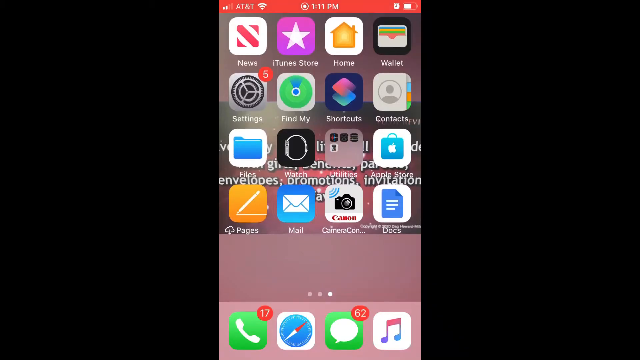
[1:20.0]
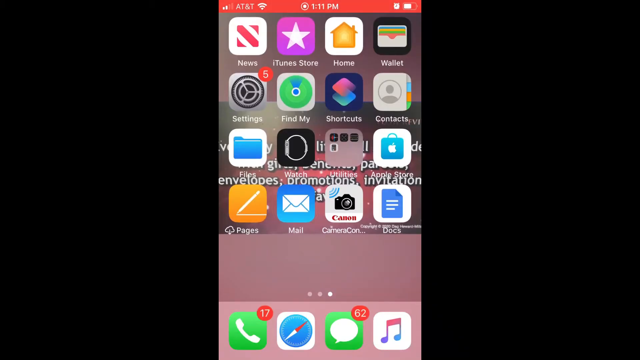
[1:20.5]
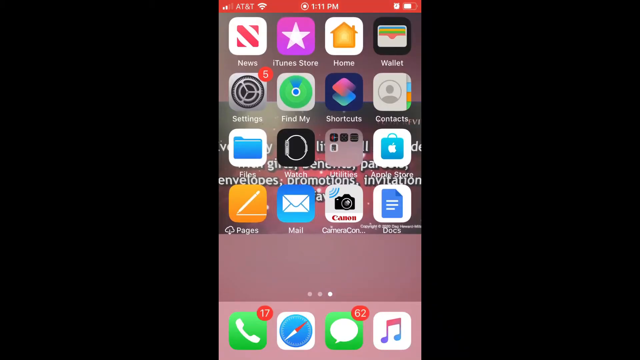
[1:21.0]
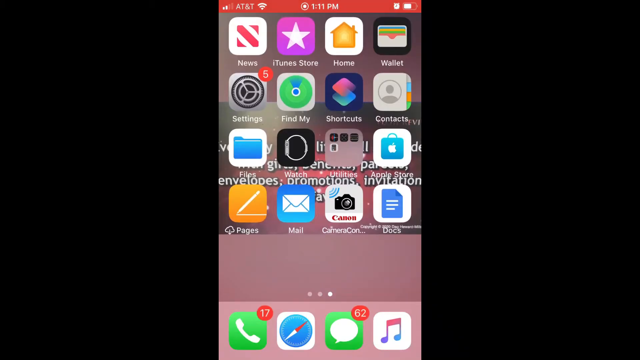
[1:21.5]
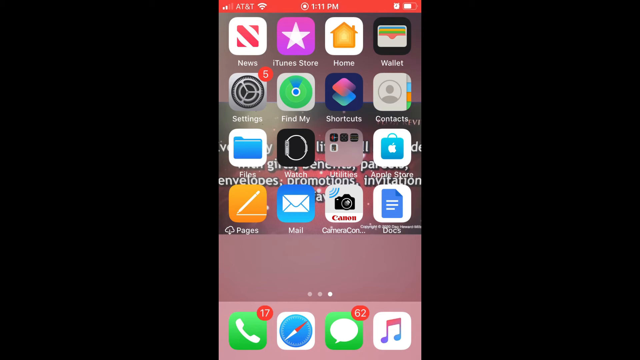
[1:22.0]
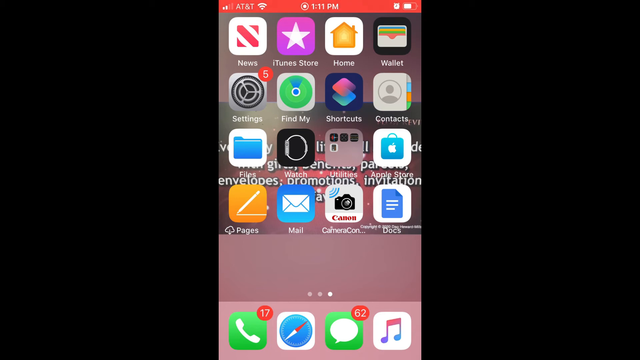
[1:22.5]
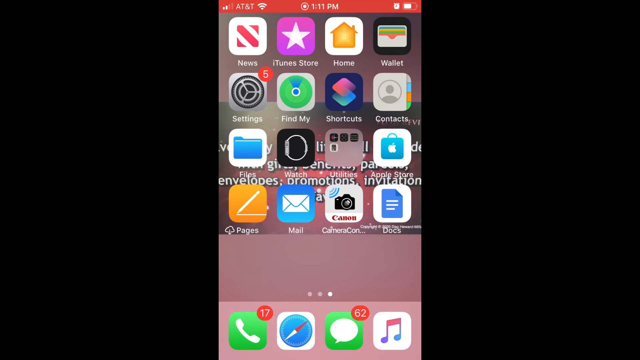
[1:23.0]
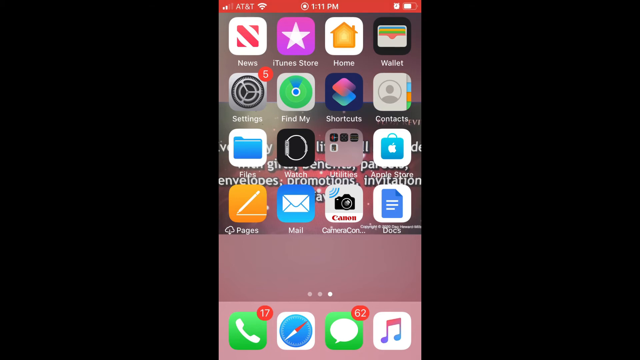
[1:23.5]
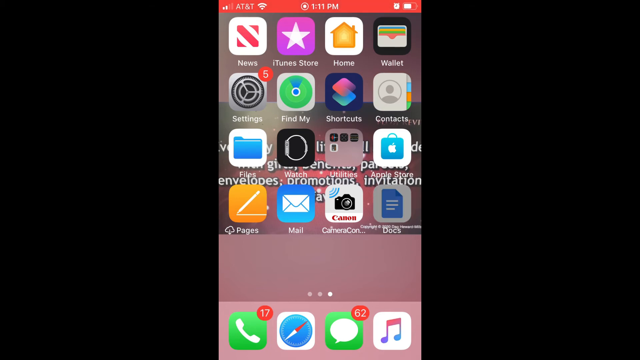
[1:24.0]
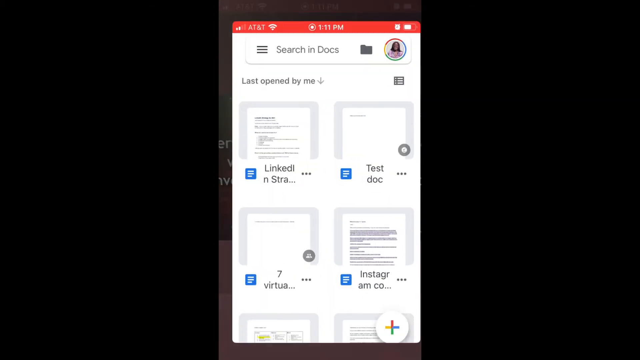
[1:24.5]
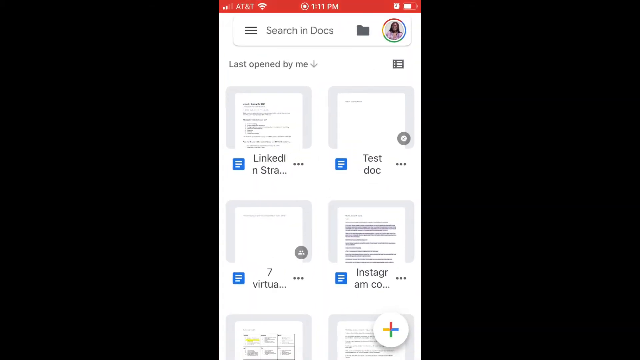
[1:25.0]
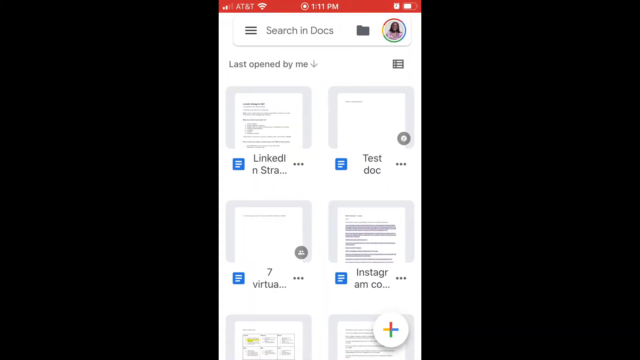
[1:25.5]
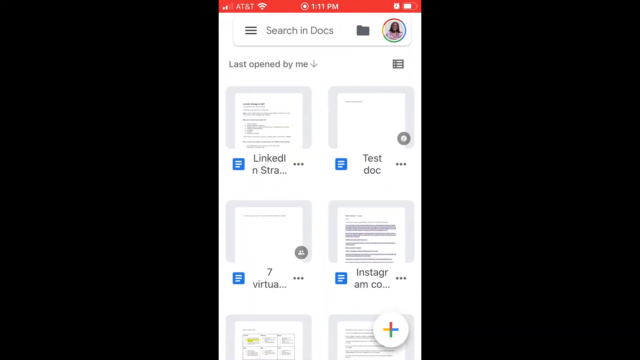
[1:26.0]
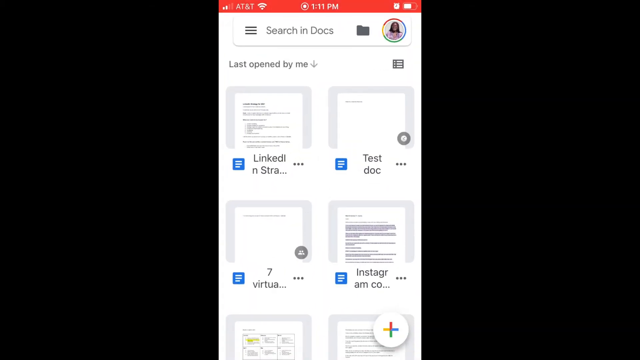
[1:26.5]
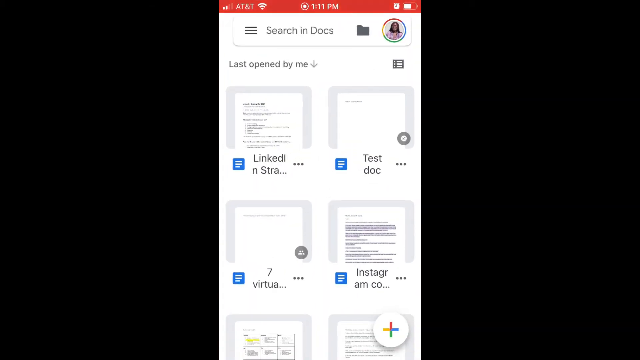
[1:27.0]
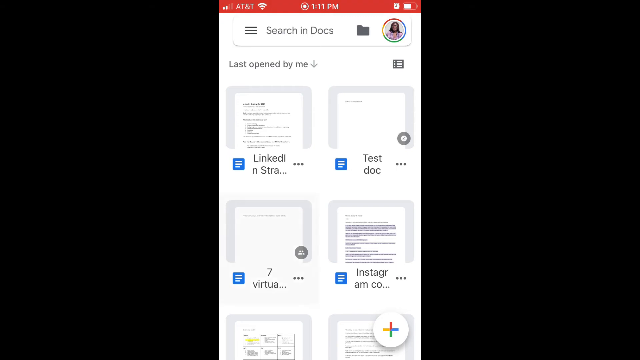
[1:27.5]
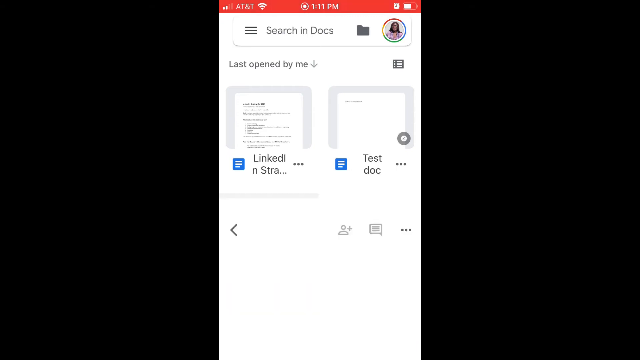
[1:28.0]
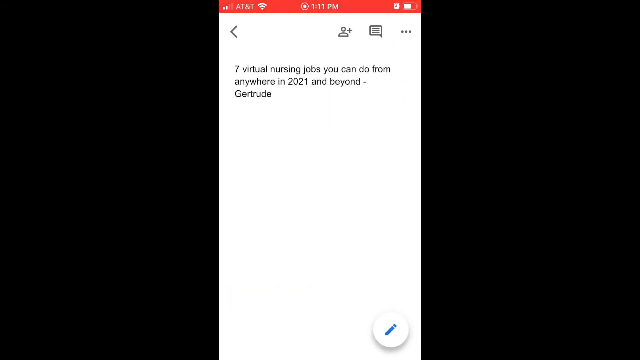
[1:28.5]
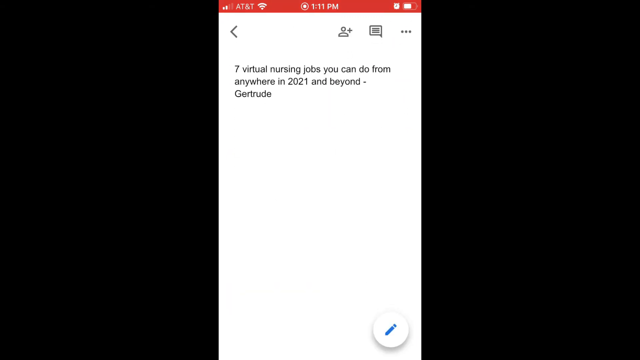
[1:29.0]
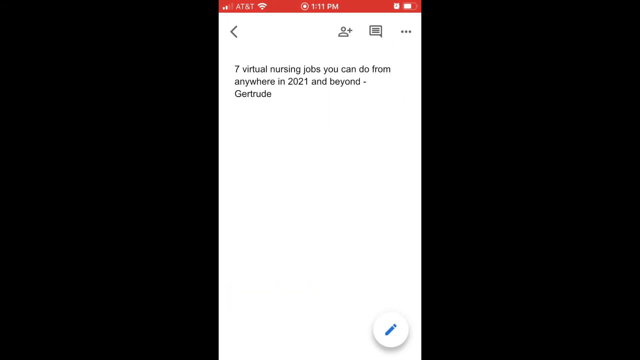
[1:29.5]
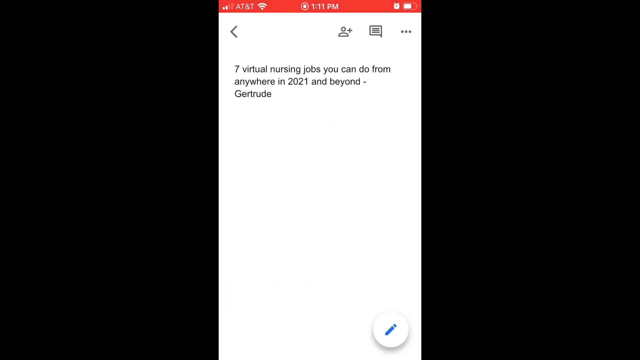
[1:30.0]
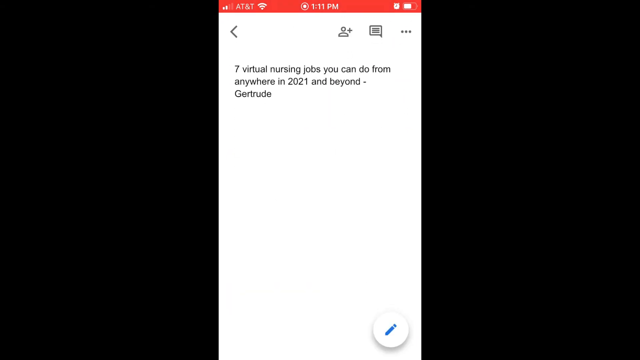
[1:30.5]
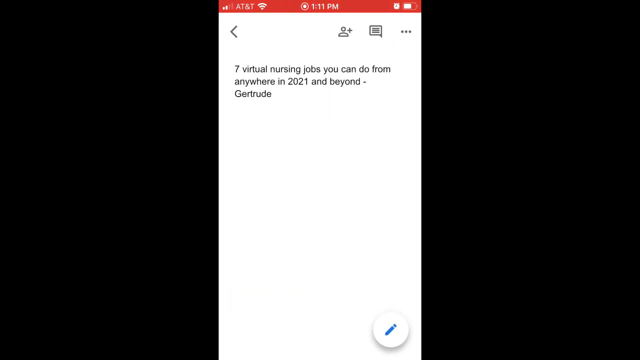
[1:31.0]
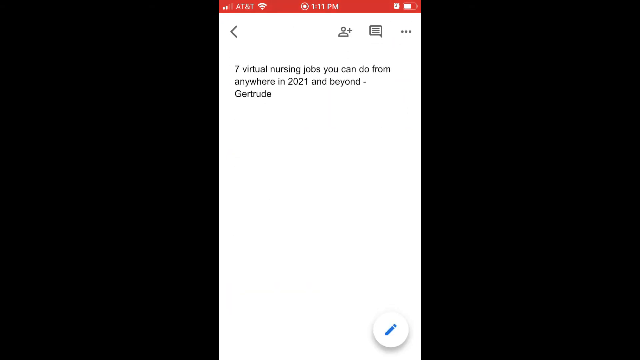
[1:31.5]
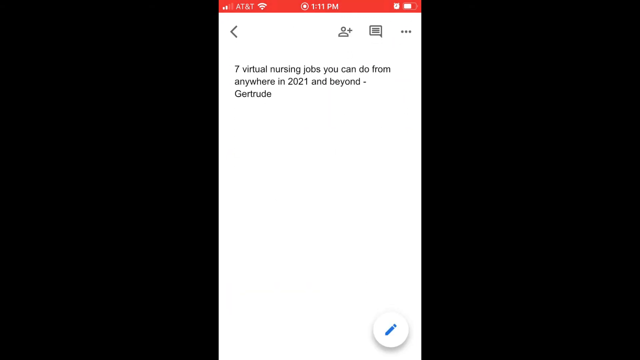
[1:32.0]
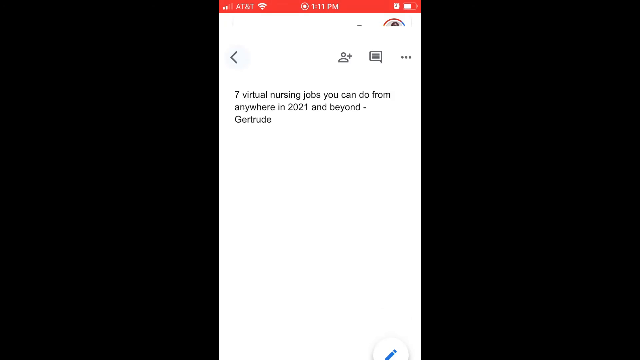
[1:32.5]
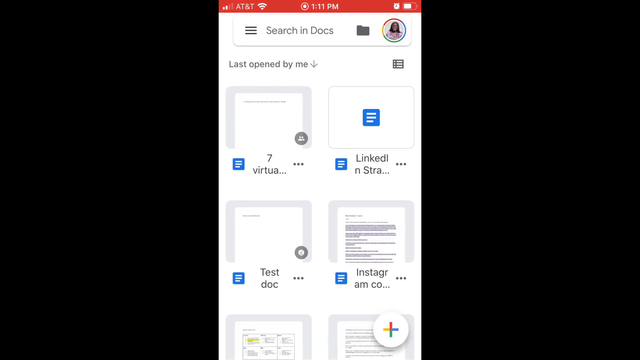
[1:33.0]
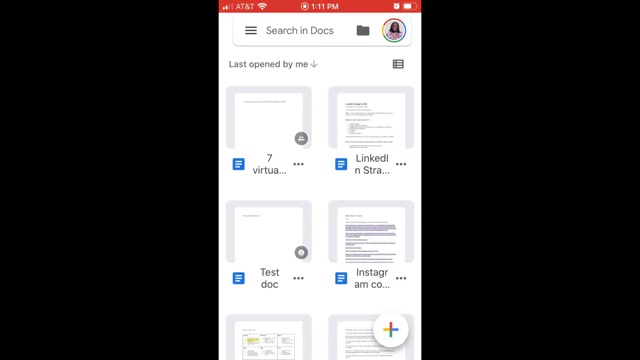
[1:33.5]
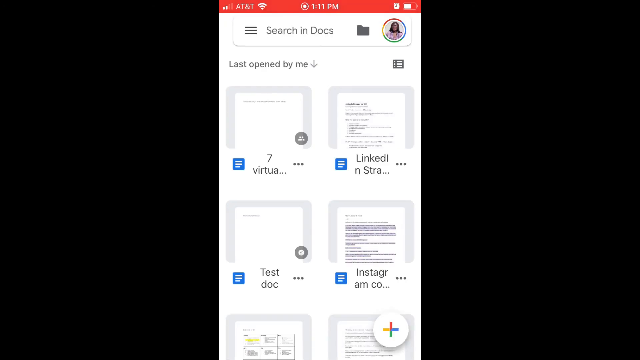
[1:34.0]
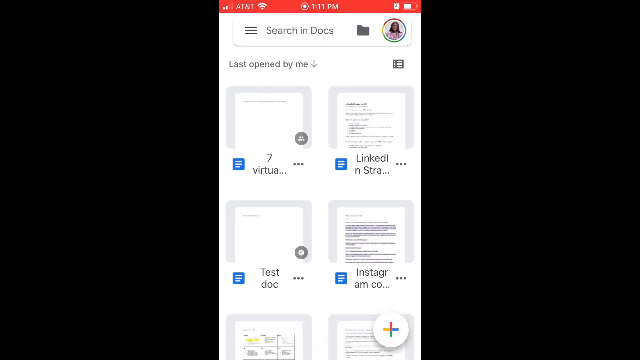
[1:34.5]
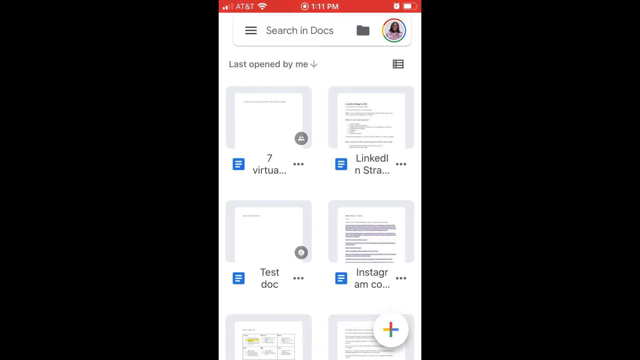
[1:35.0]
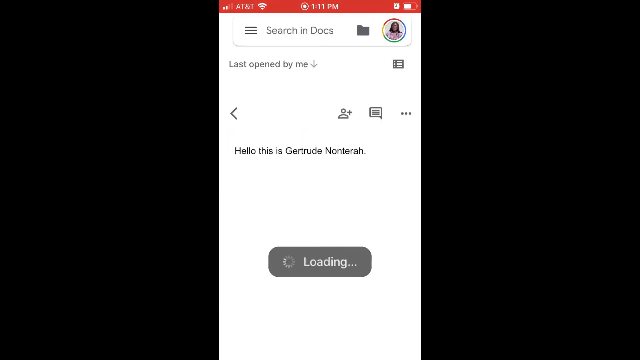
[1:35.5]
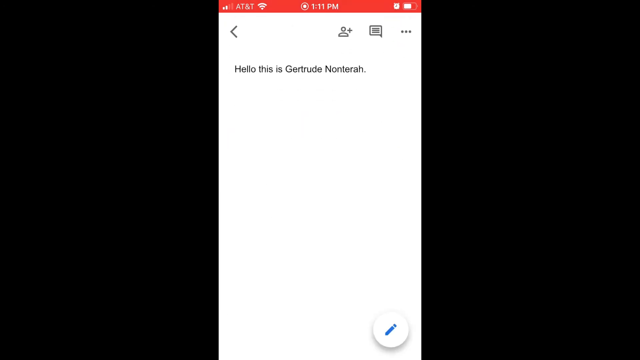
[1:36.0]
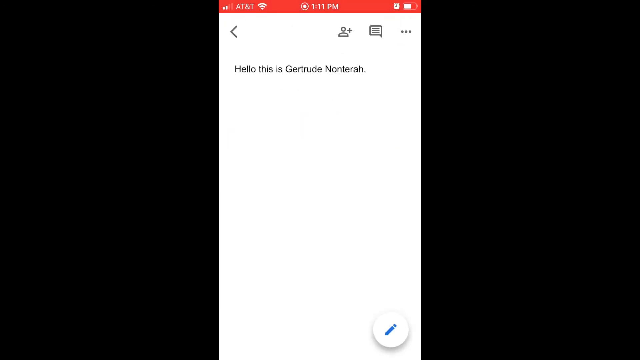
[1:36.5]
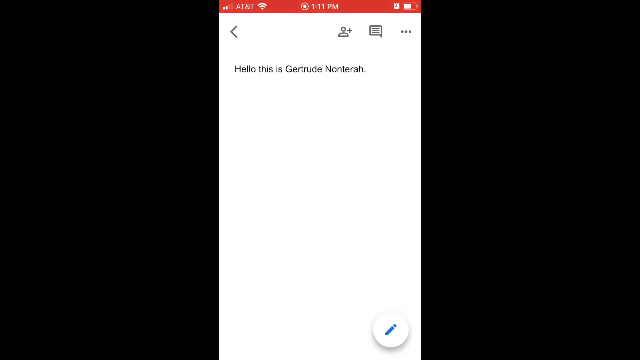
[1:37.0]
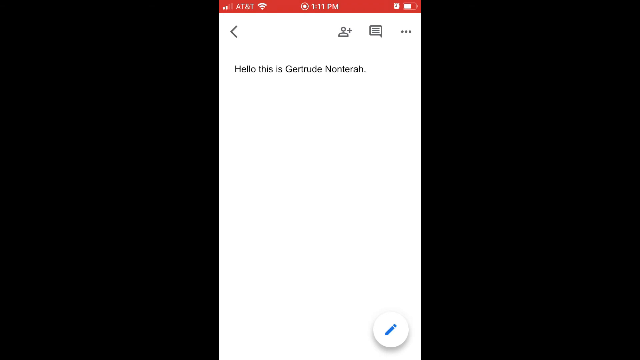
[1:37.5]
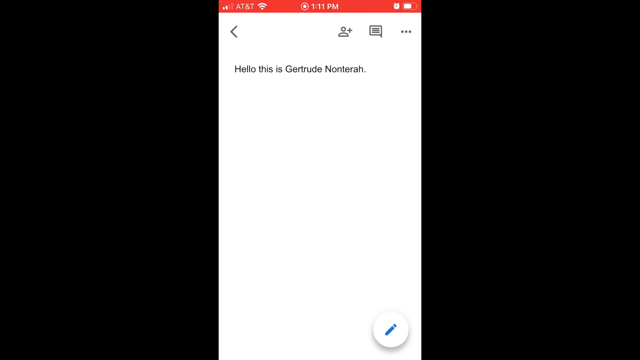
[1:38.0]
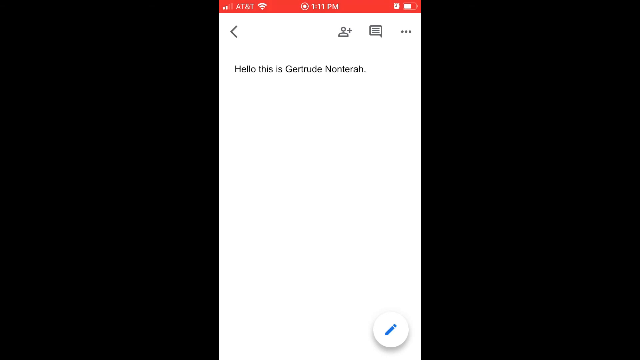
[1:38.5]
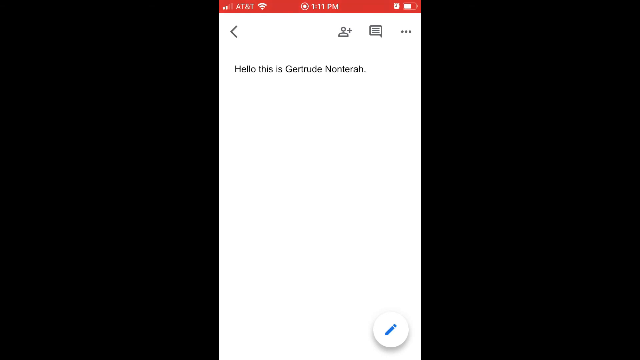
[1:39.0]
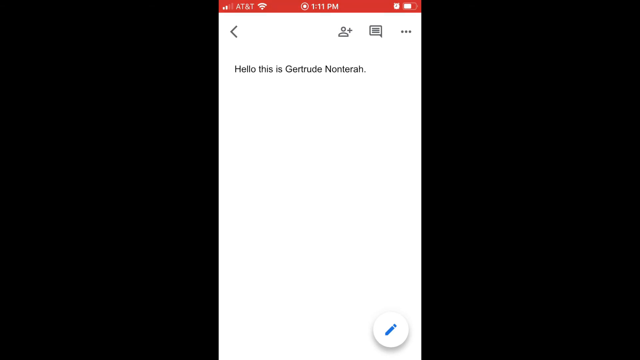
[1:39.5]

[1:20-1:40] The phone view continues. The person clicks the Google Docs app, located in the bottom-most row of the main home screen at the very bottom right. The Docs home screen appears, showing all the recent documents she has opened. She clicks the bottom left one, which contains text saying "seven virtual nursing jobs you can do from anywhere in 2021 and beyond, Gertrude". She then goes to a different document, apparently the bottom left one again, since the list reorders by most recently opened, swapping the bottom left and top left documents. This document says "Hello, this is Gertrude Nantrea."